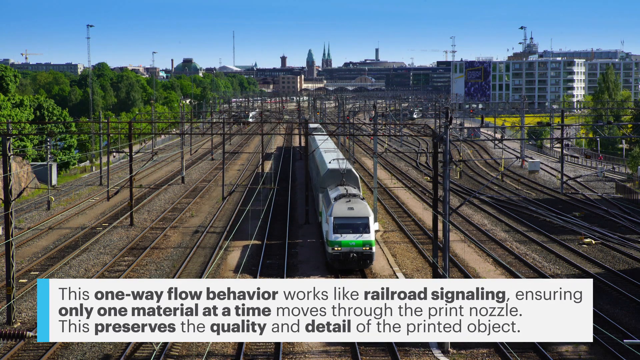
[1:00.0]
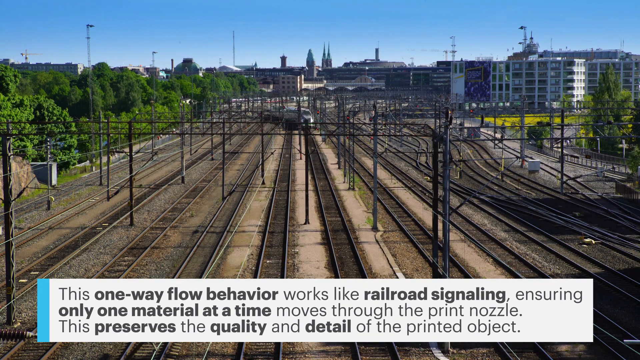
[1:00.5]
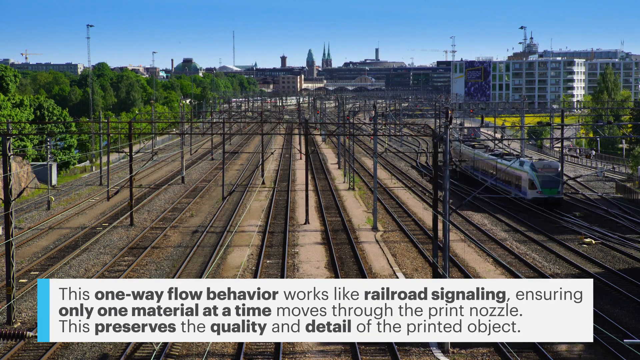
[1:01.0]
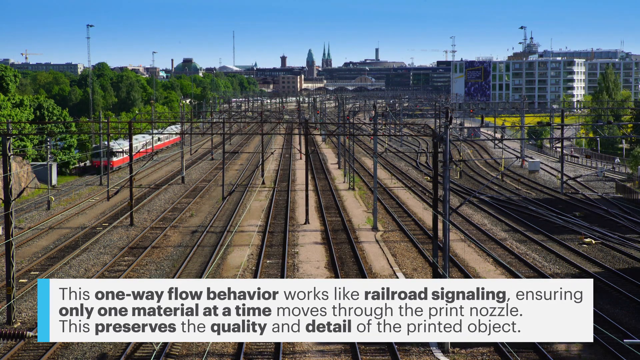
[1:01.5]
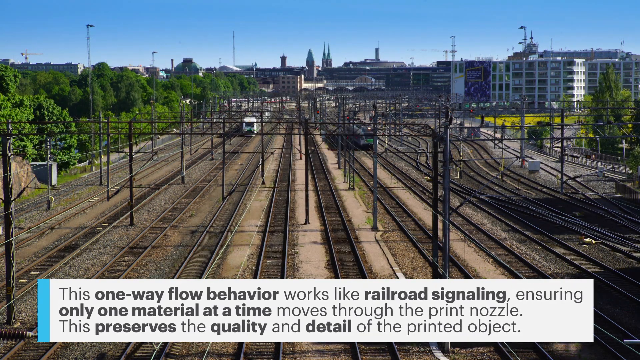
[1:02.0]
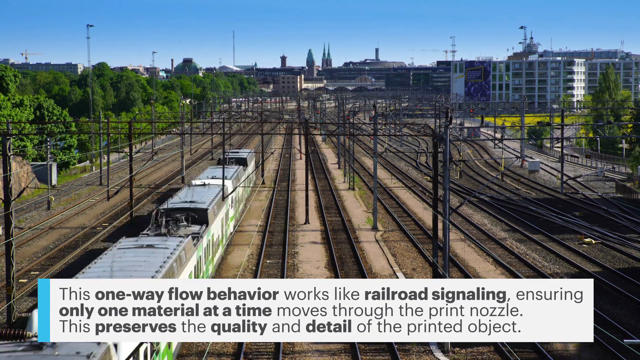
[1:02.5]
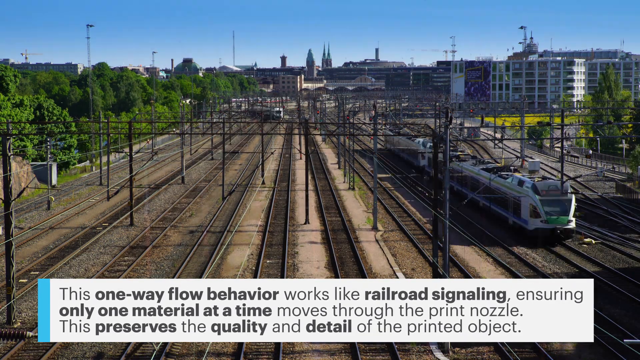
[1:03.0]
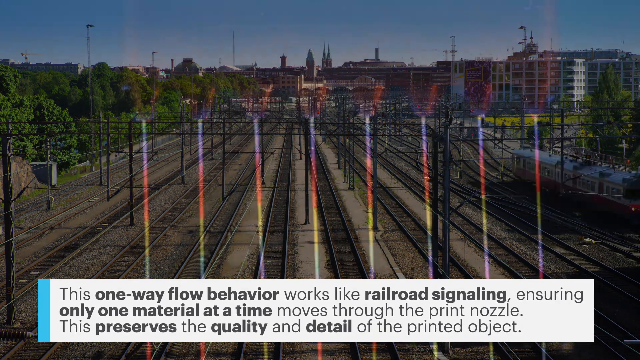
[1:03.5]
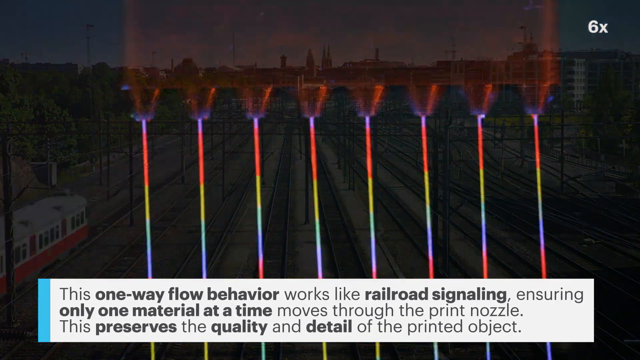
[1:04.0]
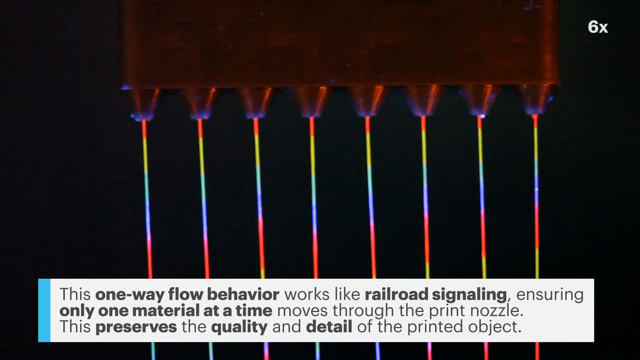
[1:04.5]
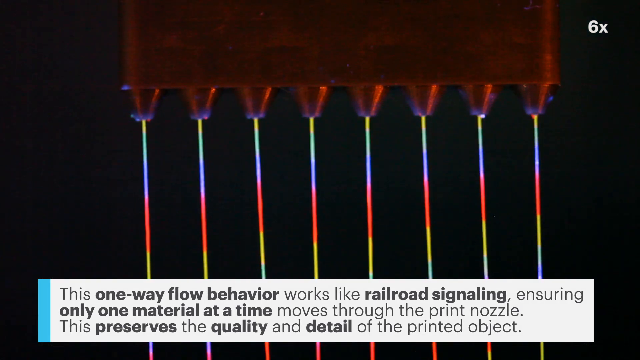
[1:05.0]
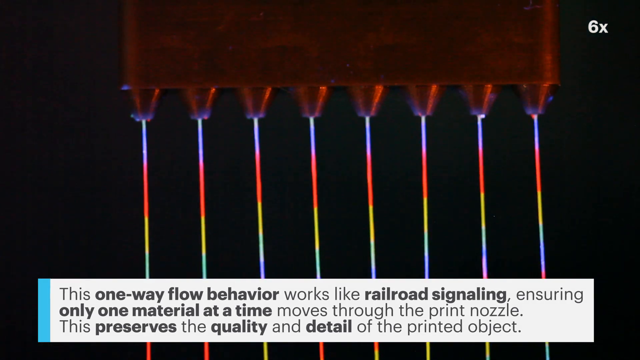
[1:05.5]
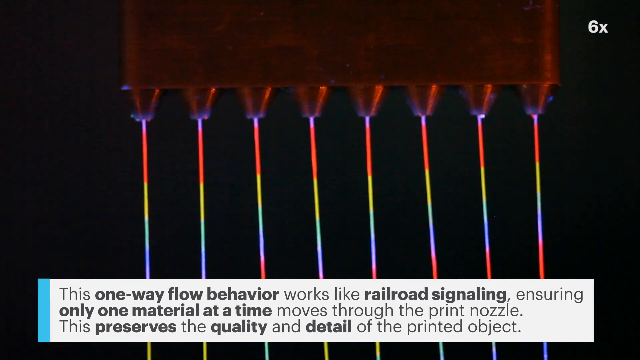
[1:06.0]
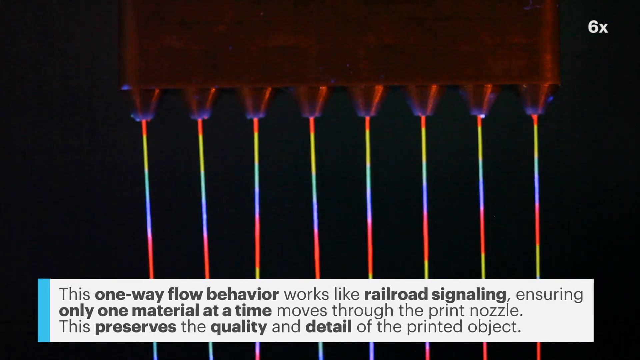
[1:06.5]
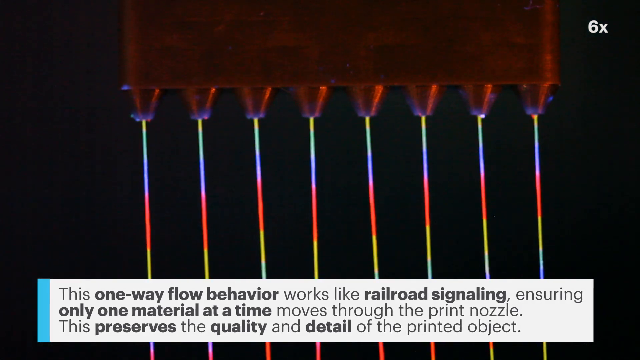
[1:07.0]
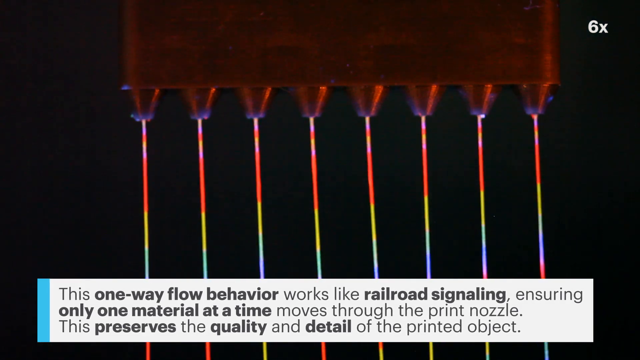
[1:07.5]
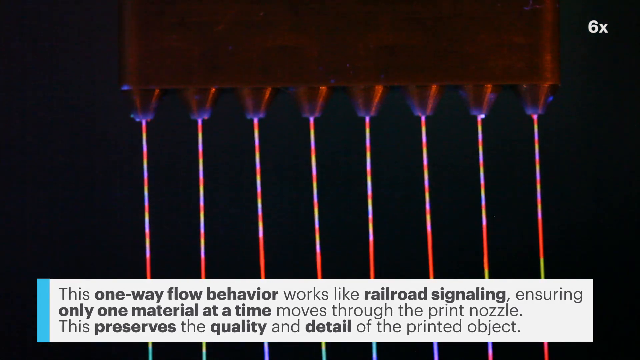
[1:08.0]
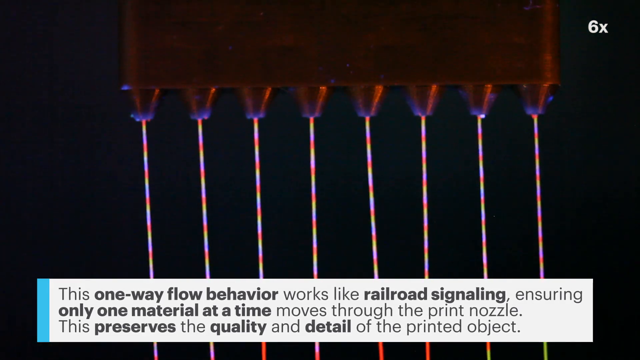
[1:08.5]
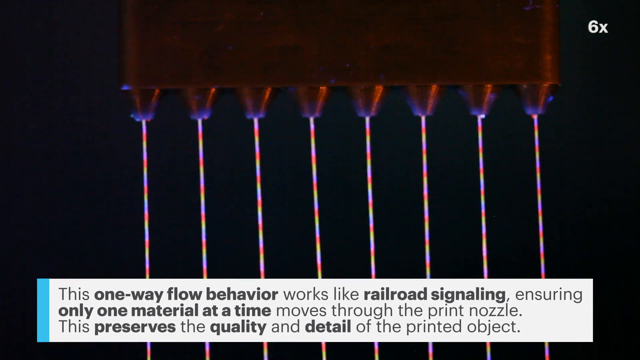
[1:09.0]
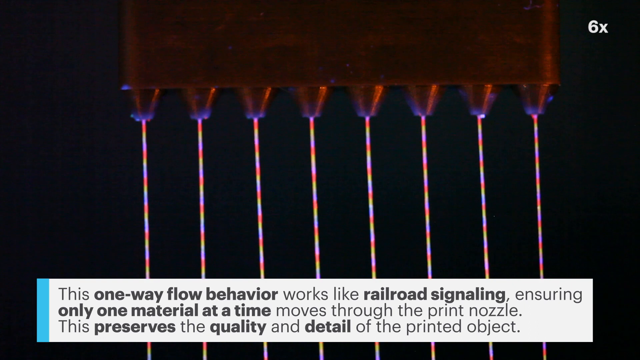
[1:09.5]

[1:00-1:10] The railway analogy continues, with many trains passing through in sped-up footage, and text stating that the one-way flow behaviour works like railway signalling, ensuring only one material at a time moves through the print nozzle and preserving the quality and detail of the printed object. Eight nozzles are then shown, all constantly changing the colour of the ink moving through their heads.